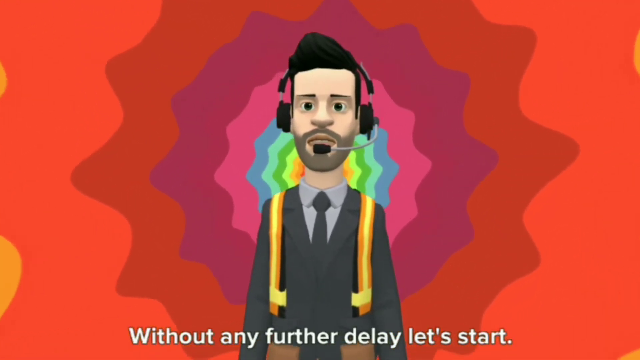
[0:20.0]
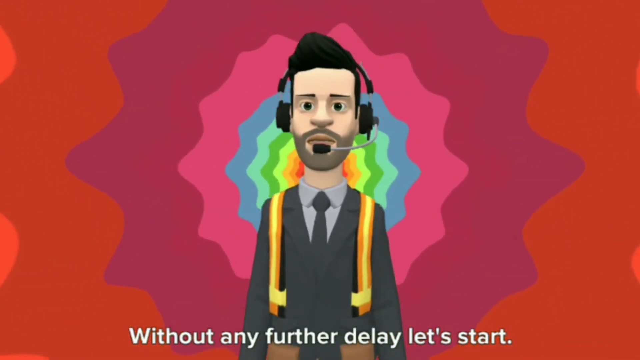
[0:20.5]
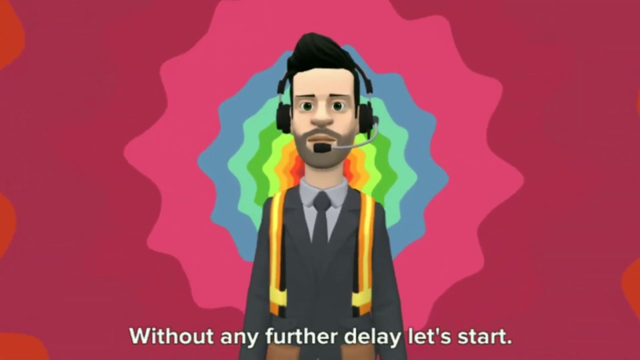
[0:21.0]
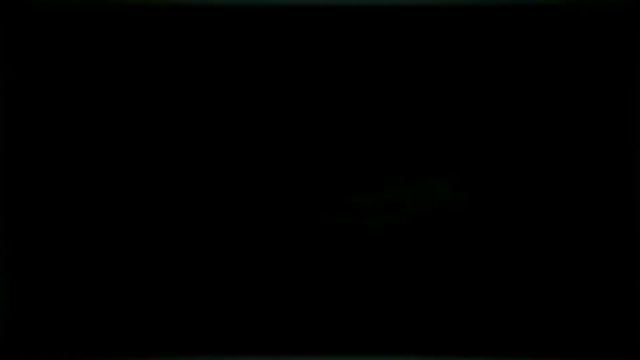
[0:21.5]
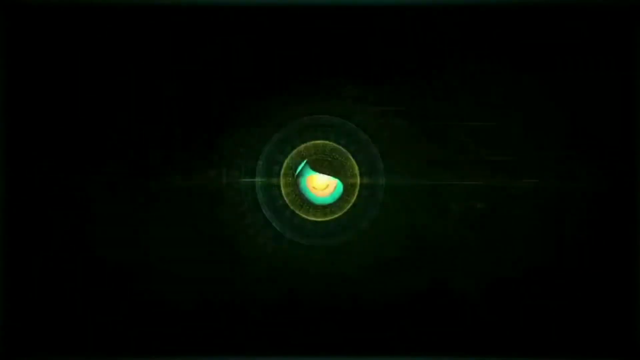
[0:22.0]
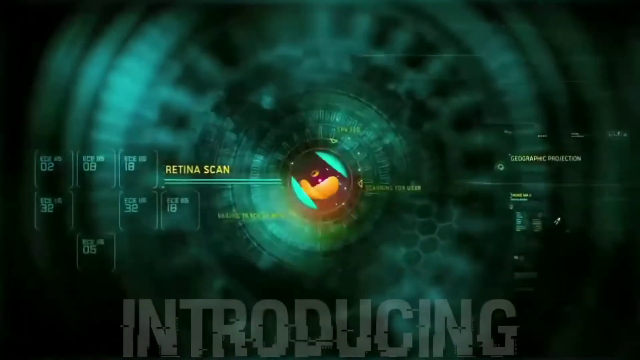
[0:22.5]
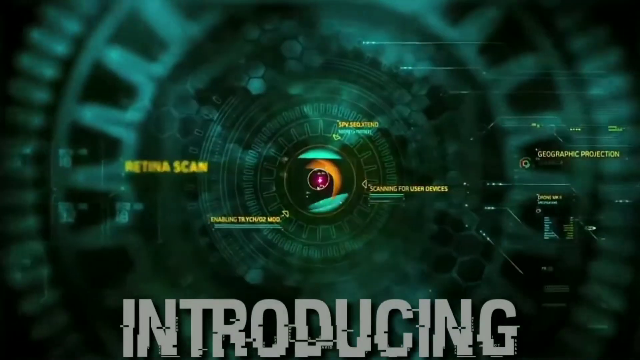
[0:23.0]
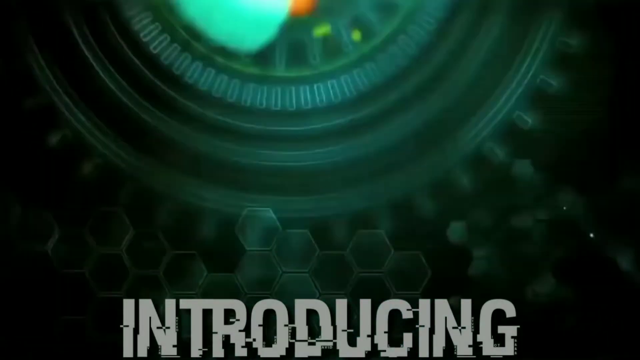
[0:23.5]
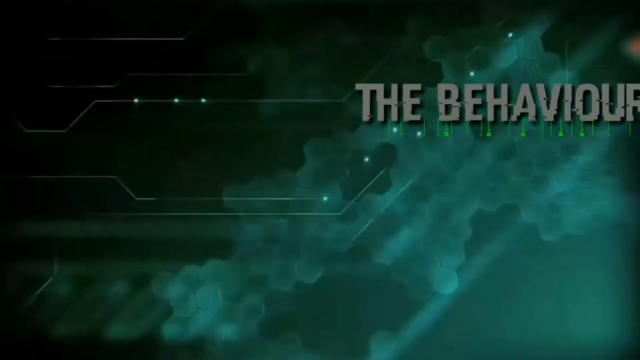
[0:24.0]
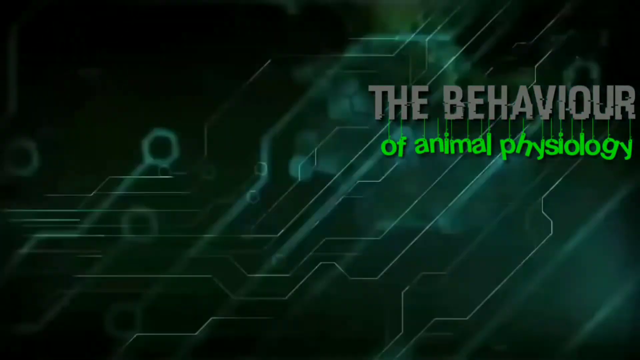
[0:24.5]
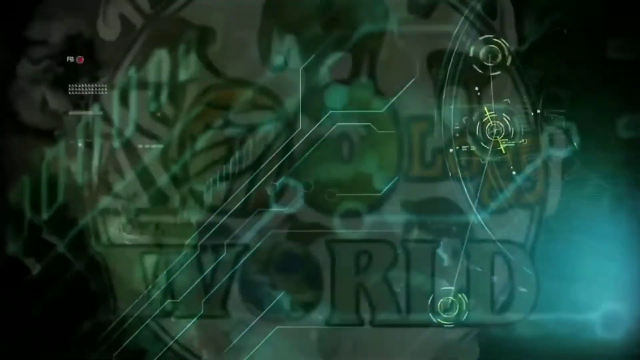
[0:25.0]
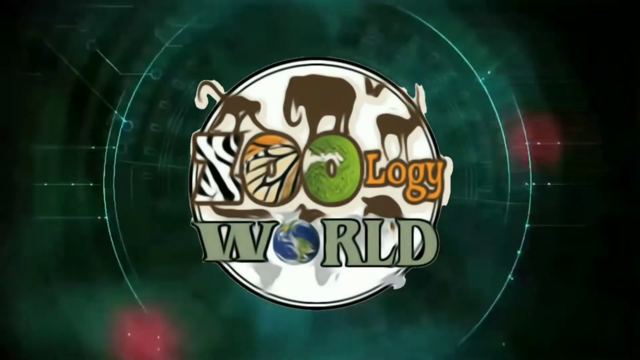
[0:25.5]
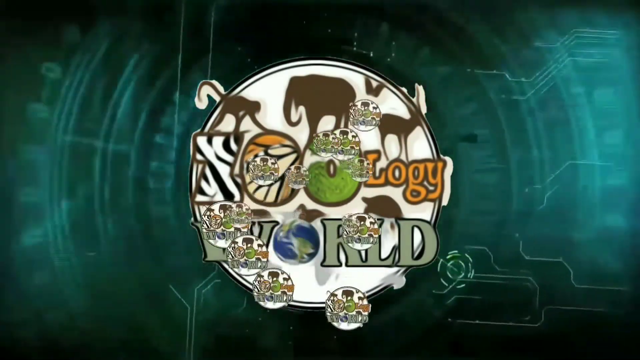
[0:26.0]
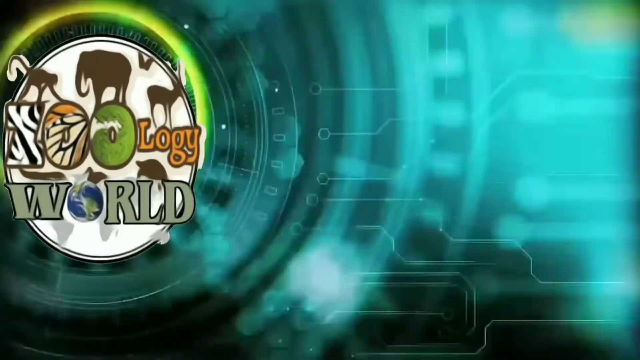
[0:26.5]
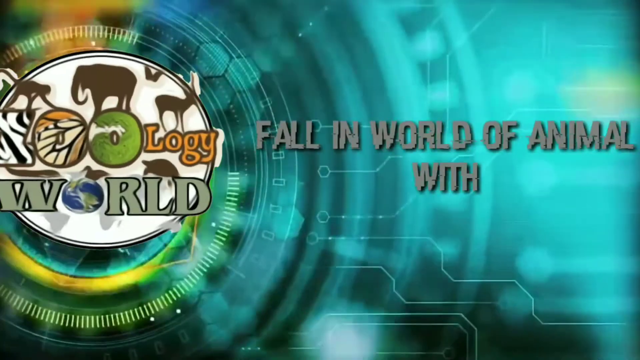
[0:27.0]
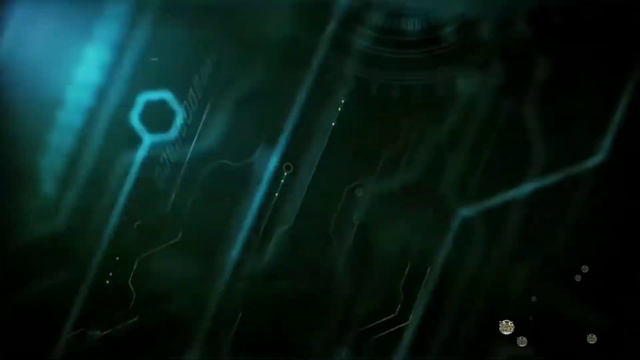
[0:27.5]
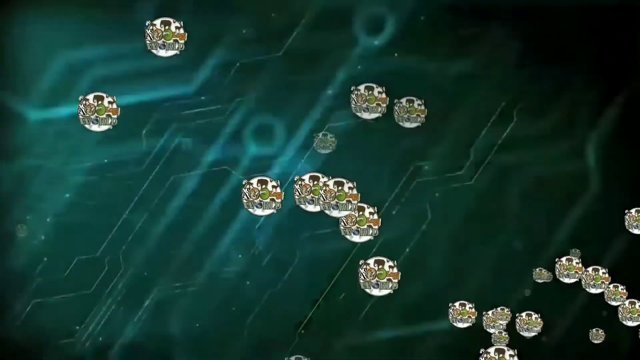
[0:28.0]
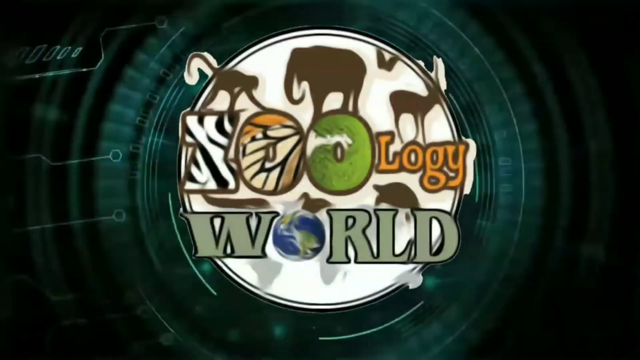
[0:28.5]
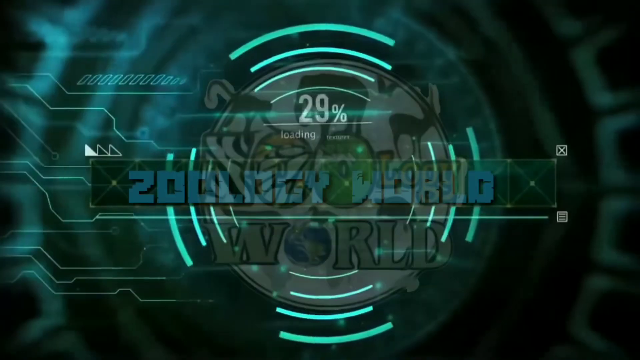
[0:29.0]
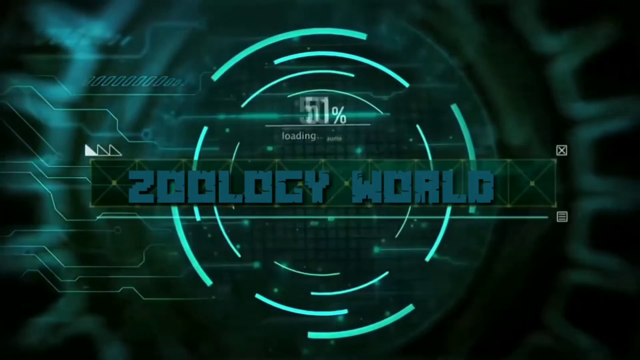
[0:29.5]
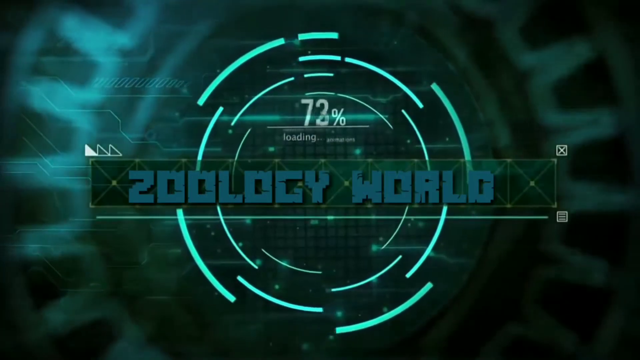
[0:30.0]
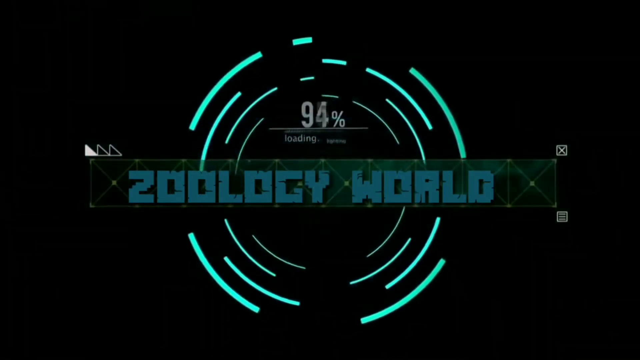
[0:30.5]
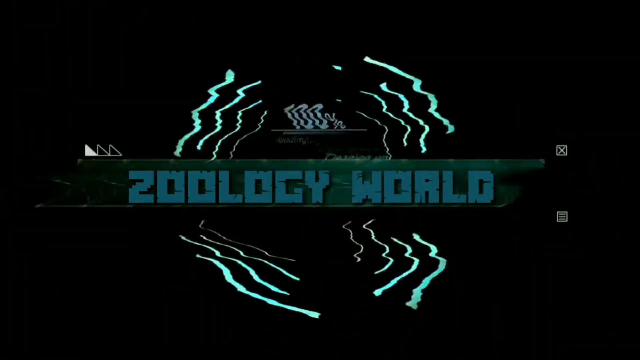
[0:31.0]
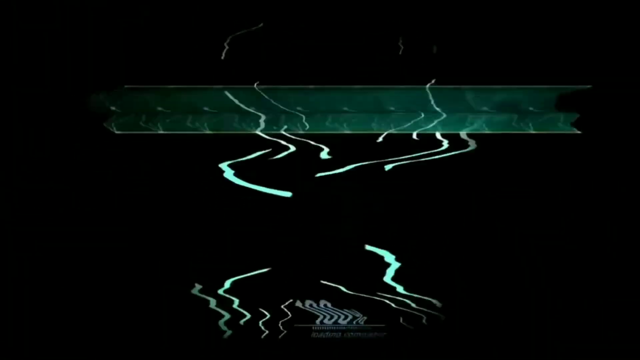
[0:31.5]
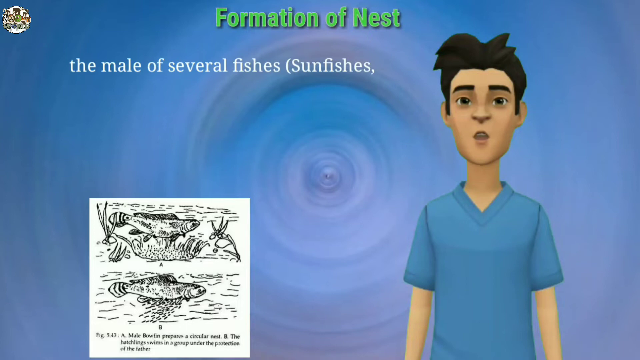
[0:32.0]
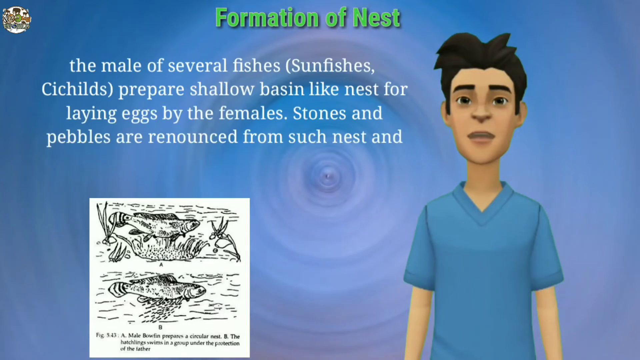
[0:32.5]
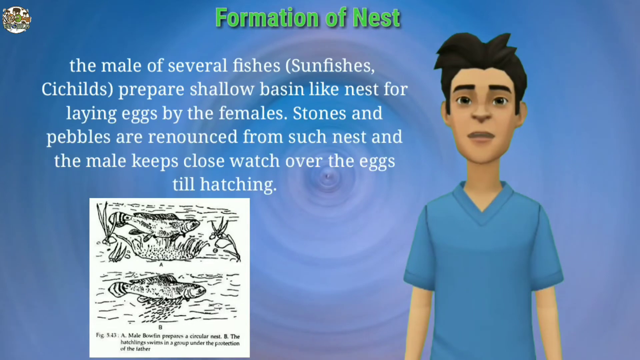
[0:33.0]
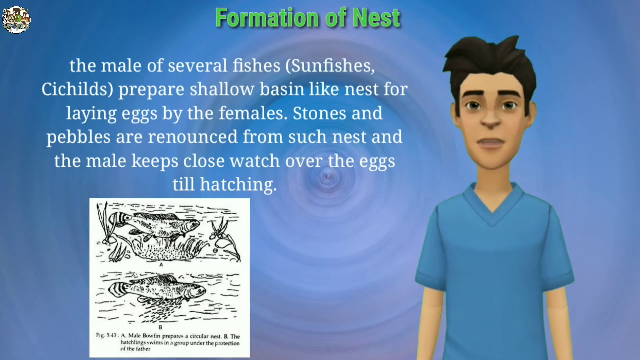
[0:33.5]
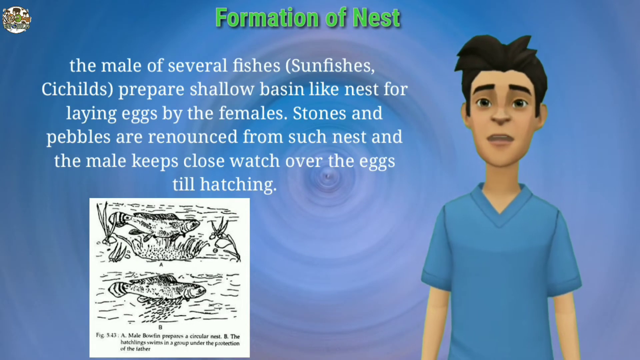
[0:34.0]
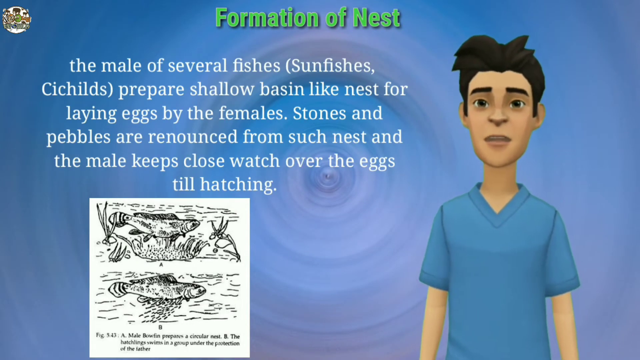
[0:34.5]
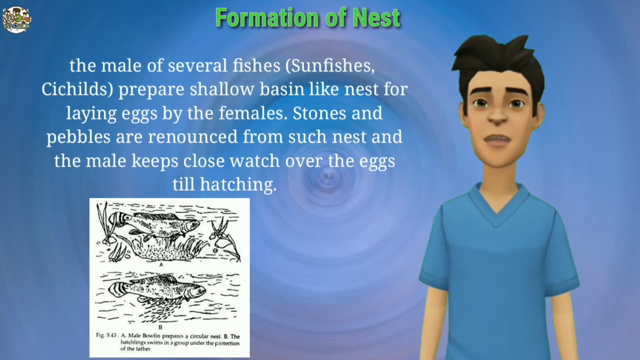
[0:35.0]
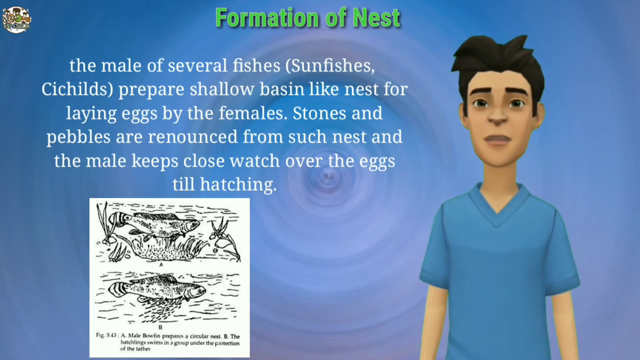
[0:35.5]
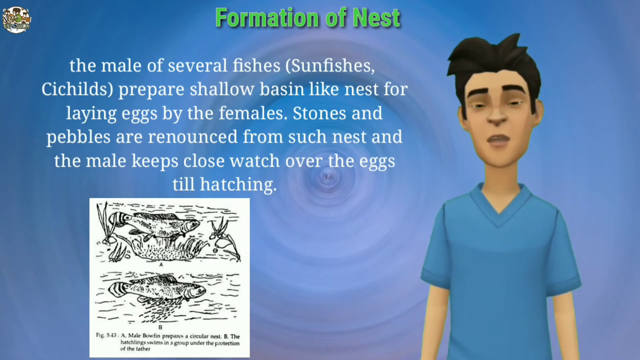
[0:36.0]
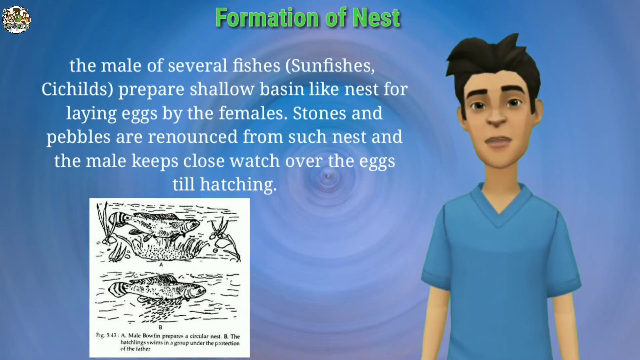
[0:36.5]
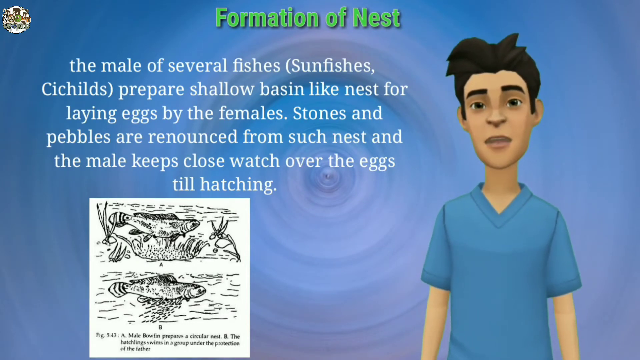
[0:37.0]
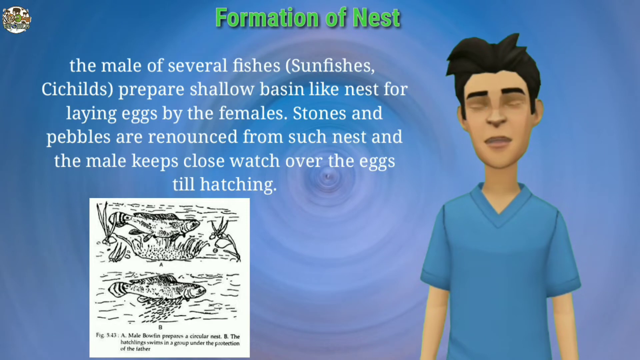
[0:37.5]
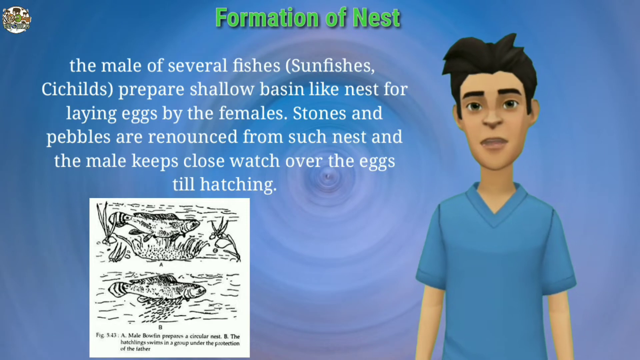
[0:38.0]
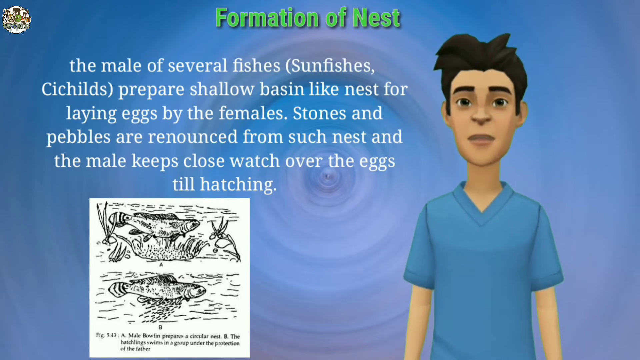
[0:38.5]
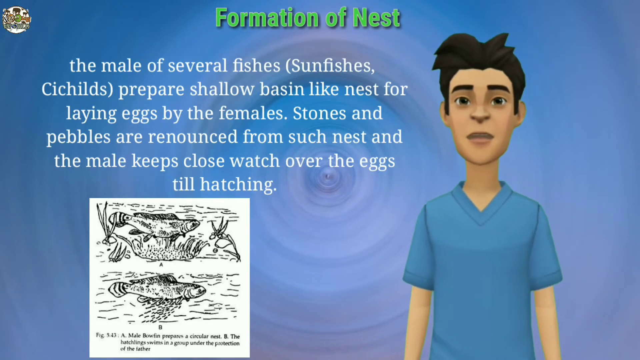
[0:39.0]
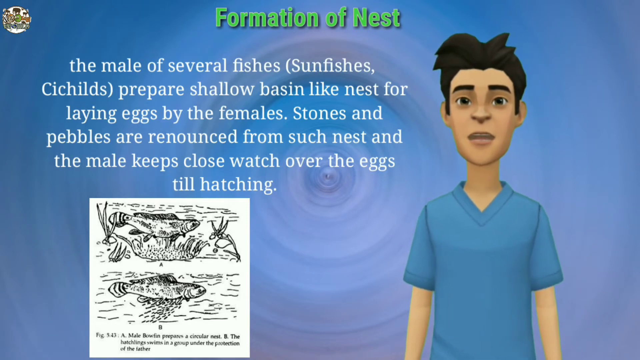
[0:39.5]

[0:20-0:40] The colours appear darker, and the word "introducing" appears. Everything moves fast: things flash, numbers spin, and percentages are shown. Text about fishes and laying eggs goes by, and a retina scan appears. Words like "behavior of animals", "ecology" and "zoology world" flash among lots of things on the screen, including a zoology world type graphic. Then comes something about the formation of the nest, with what looks like some fishes, apparently the male fish keeping close watch over the eggs. The video has a tie-dye, hippie type feel.